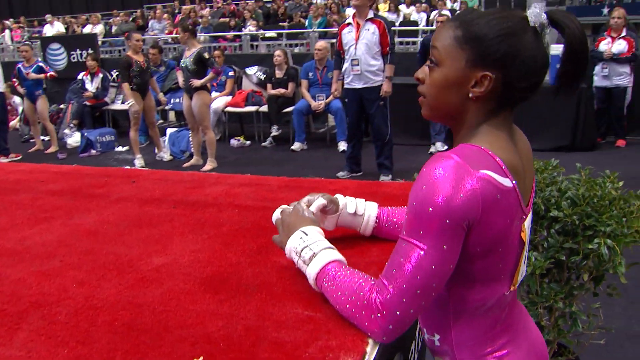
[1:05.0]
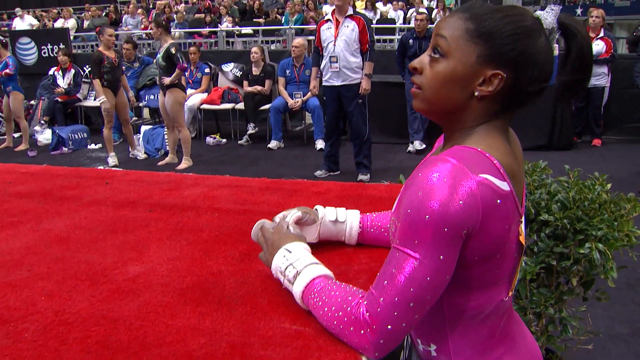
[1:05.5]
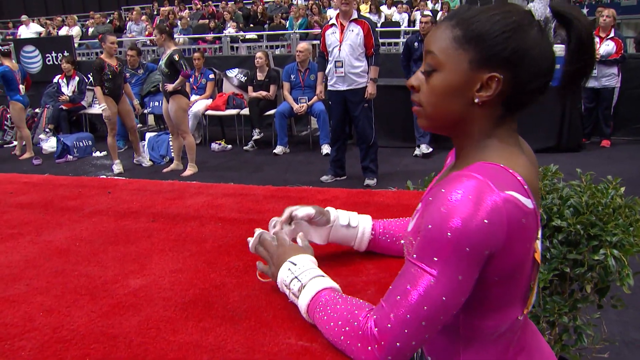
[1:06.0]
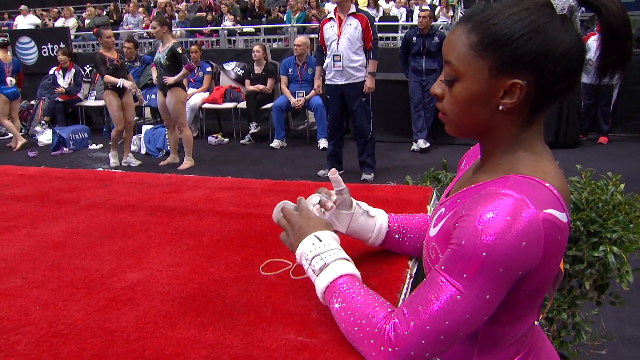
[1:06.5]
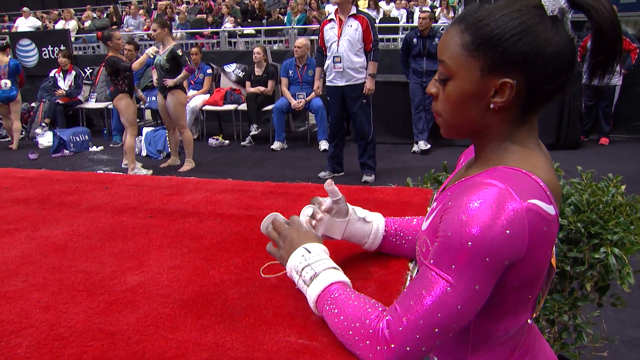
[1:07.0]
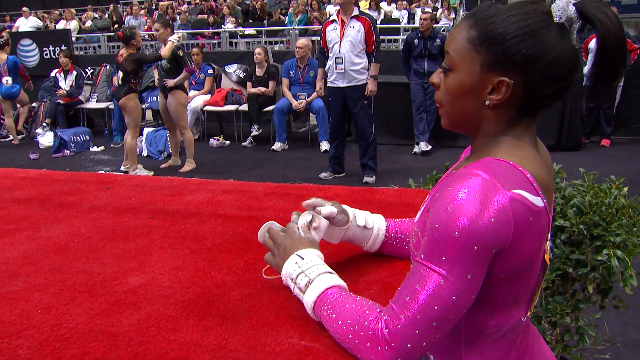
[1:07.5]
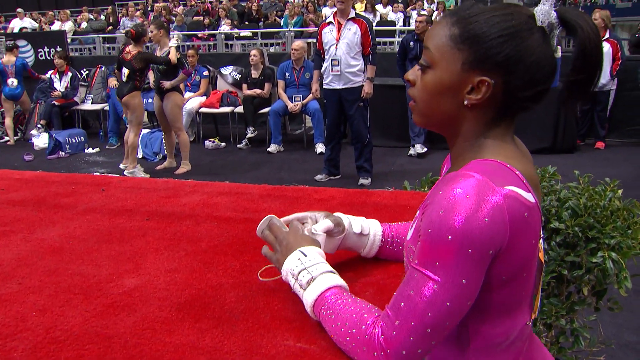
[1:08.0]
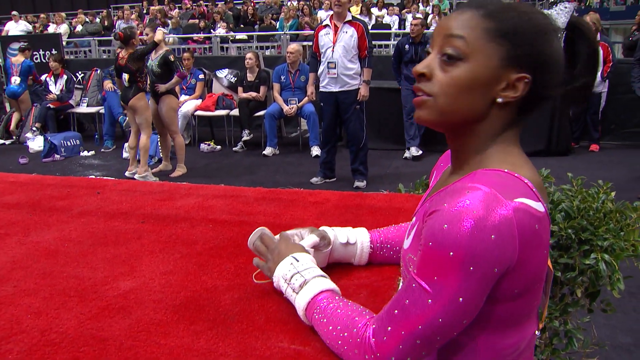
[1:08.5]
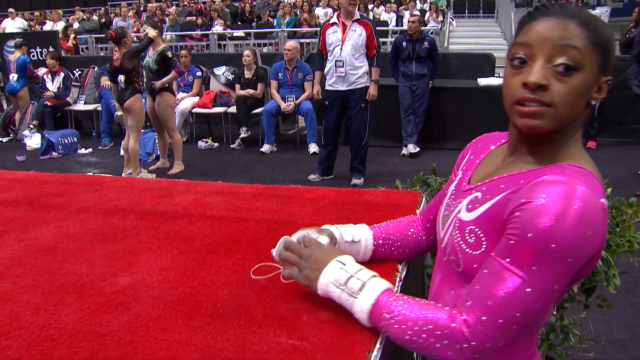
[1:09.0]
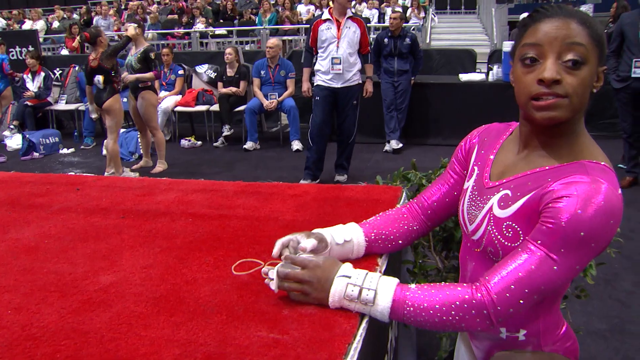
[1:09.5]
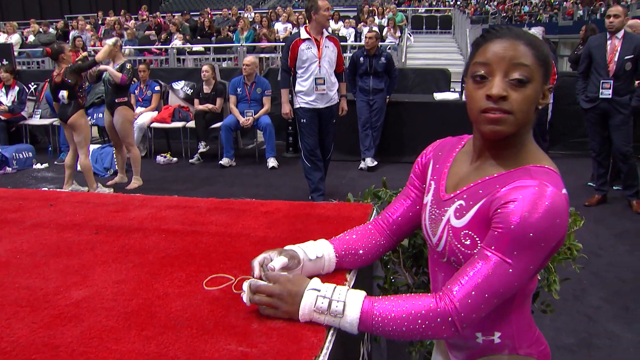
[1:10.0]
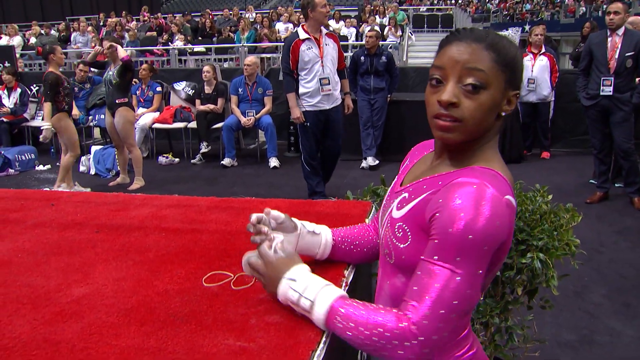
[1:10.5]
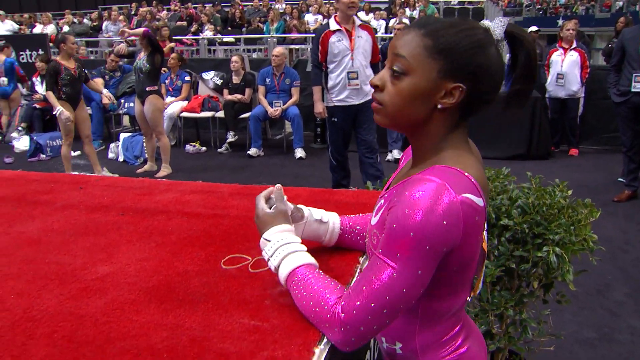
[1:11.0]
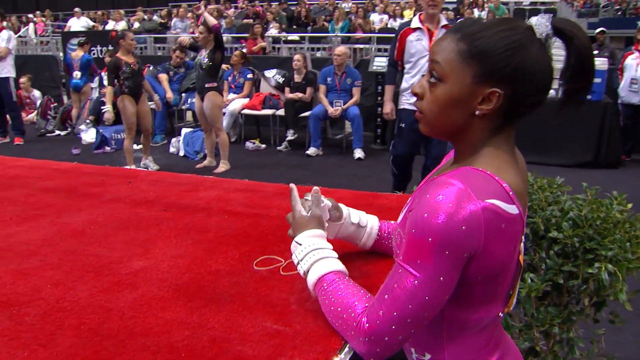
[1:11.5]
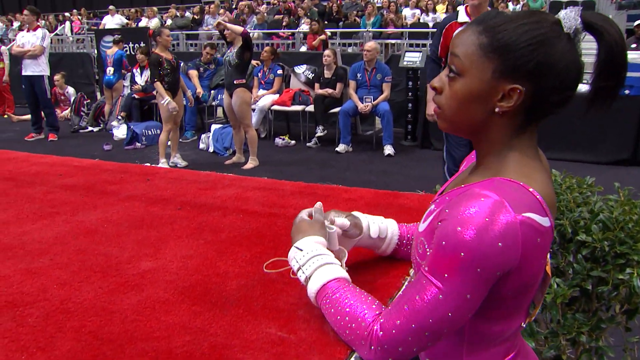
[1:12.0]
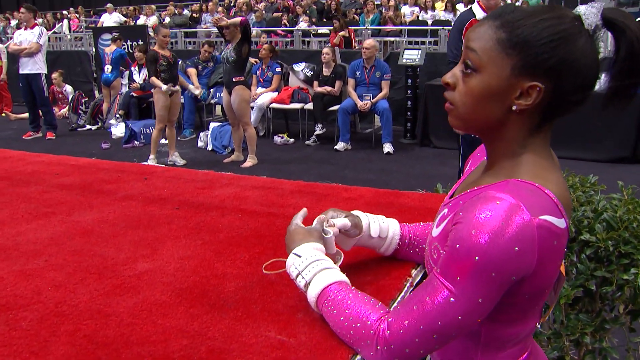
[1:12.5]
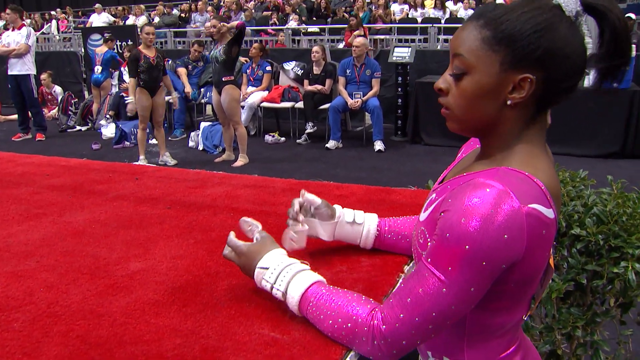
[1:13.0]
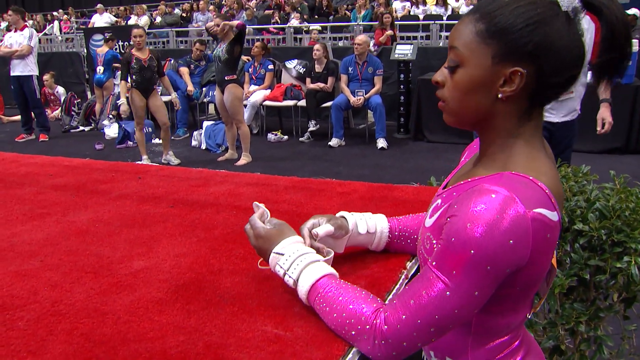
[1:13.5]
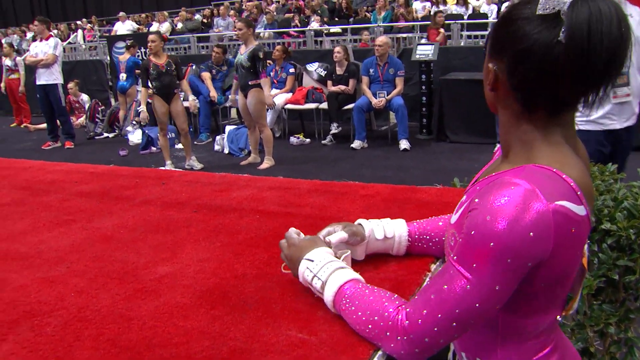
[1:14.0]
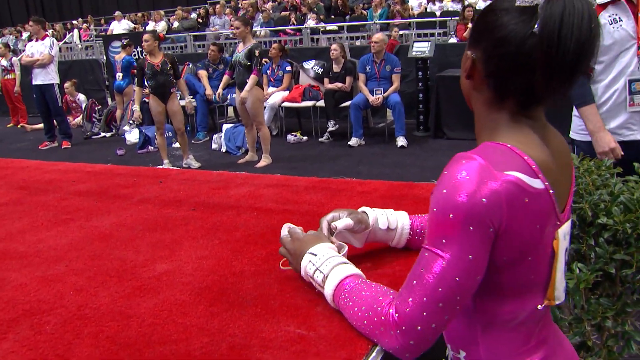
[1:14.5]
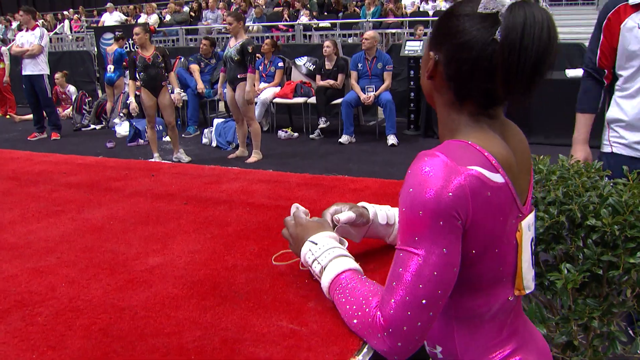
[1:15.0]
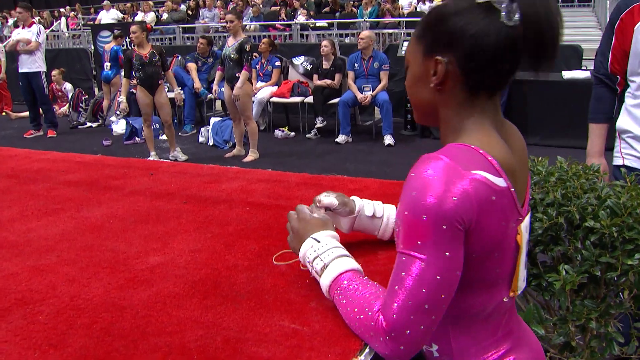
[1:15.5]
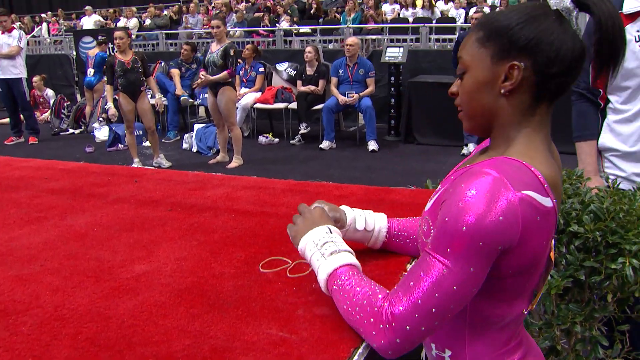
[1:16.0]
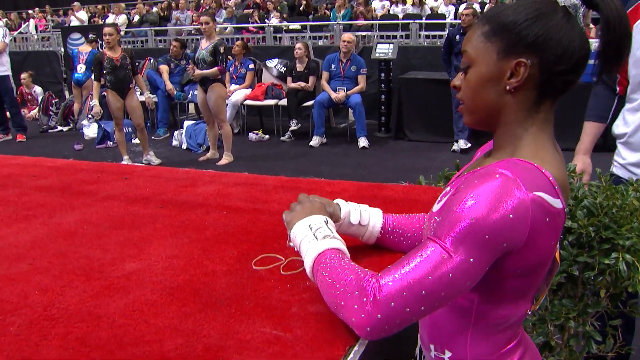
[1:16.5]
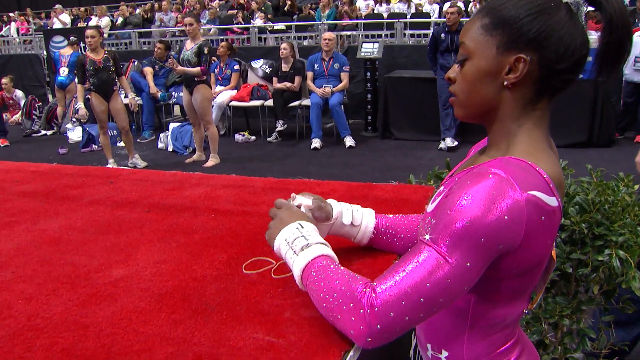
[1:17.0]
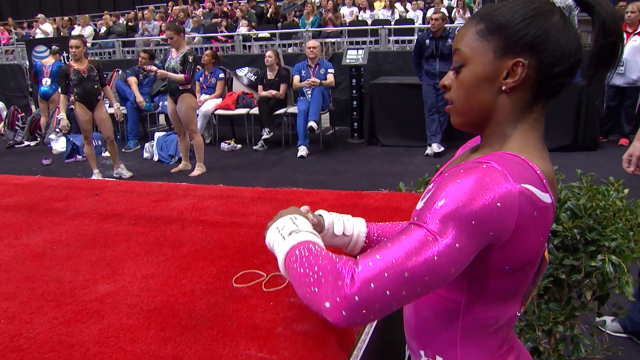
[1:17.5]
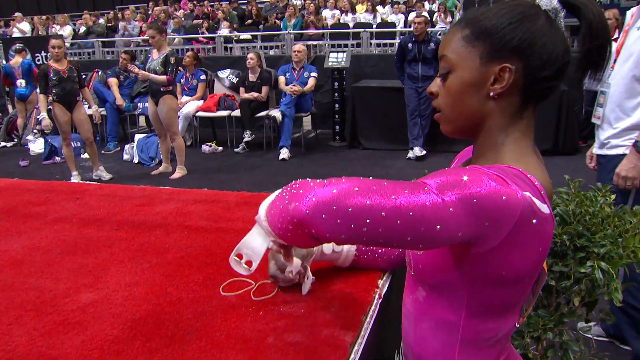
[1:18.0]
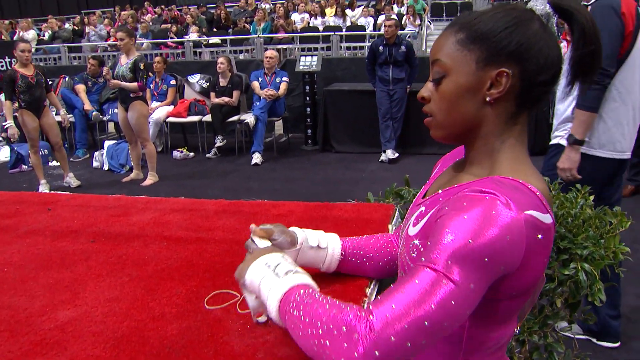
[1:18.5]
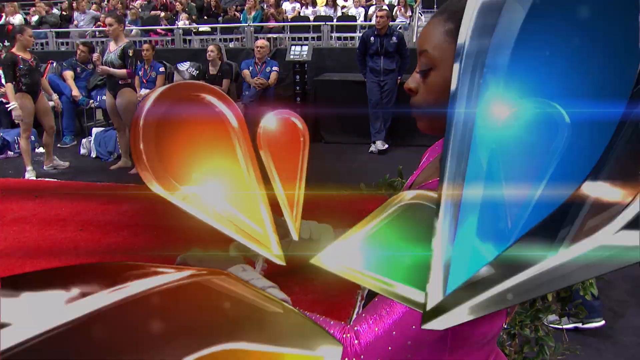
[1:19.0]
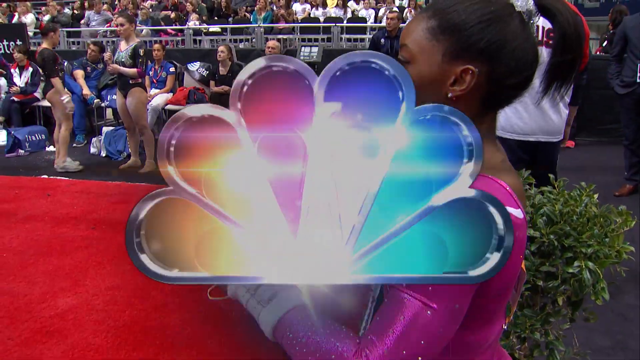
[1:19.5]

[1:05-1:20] The gymnast rests on the platform with her arms on top of a little stand, seemingly resting her forearms or undoing her wrist wraps. She looks at the camera for a second. Many people are in the background, including other women, presumably gymnasts, wearing black sparkly uniforms who seem to be conversing among themselves, and older people sitting in the background behind those two. Various people wear uniform jackets, and some wear suits and ties. At the very end, the MSNBC logo appears.